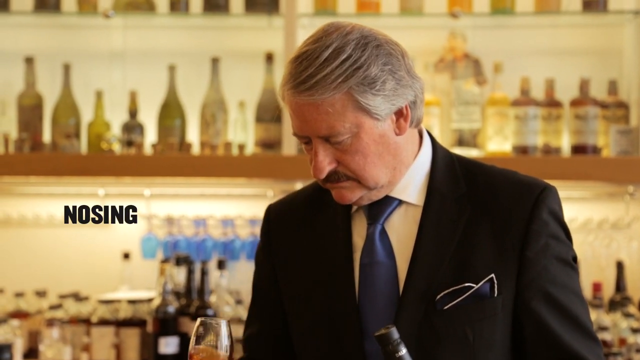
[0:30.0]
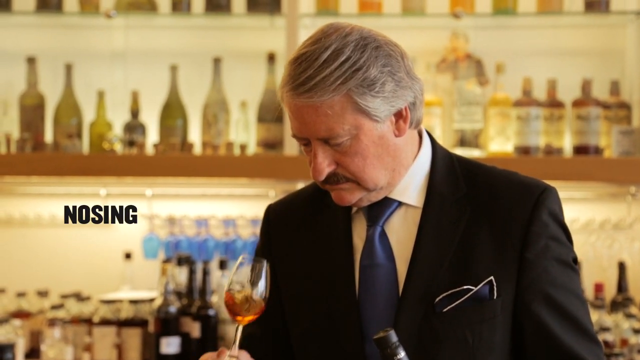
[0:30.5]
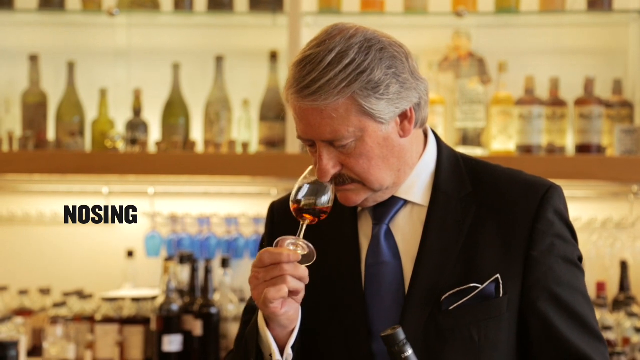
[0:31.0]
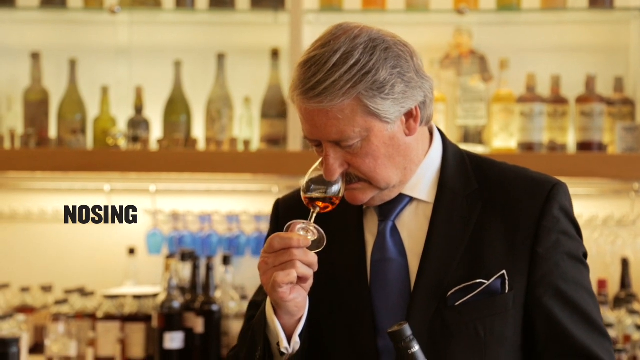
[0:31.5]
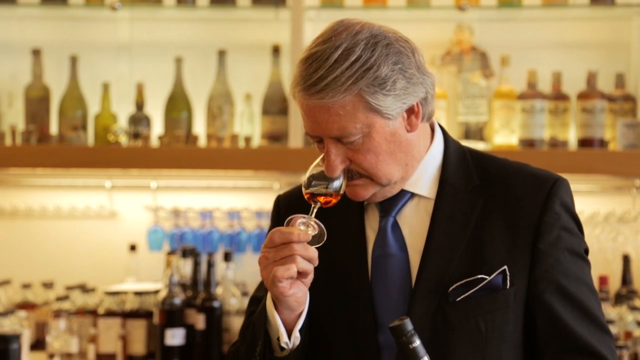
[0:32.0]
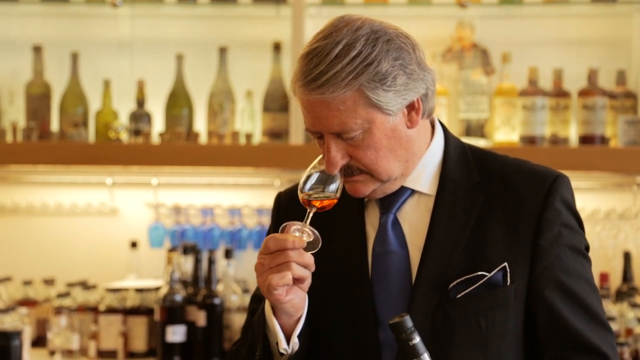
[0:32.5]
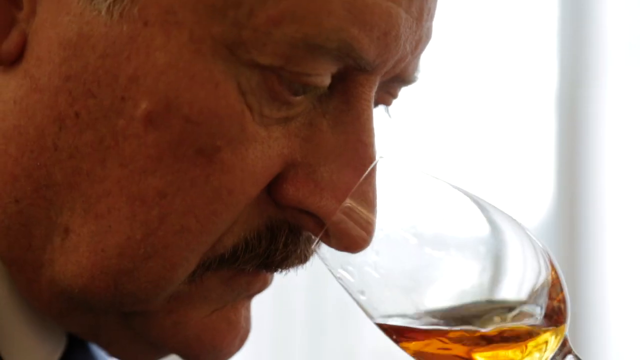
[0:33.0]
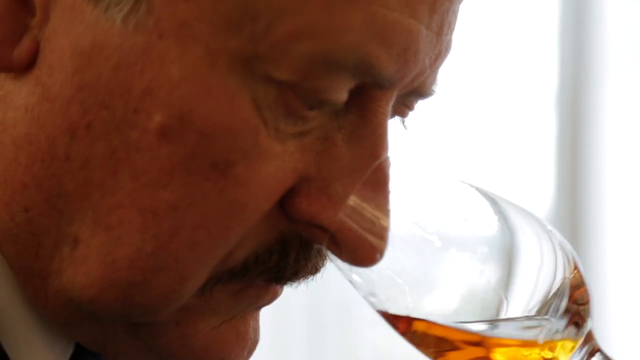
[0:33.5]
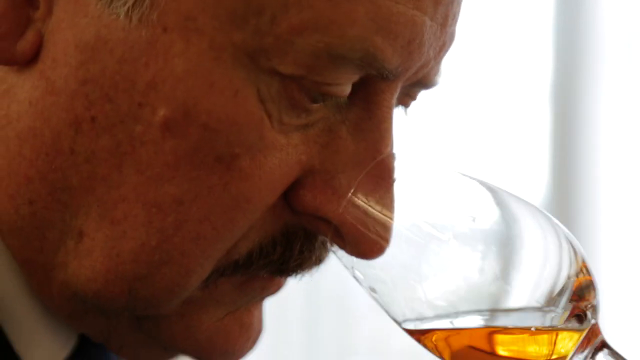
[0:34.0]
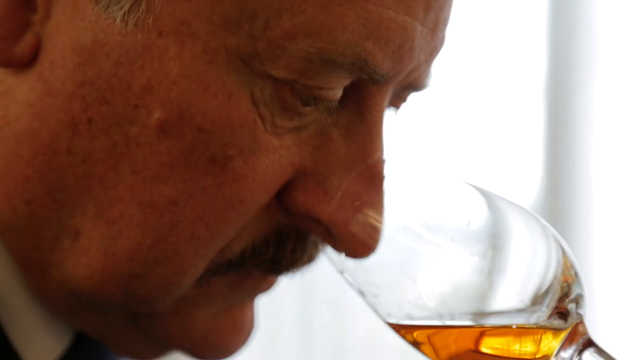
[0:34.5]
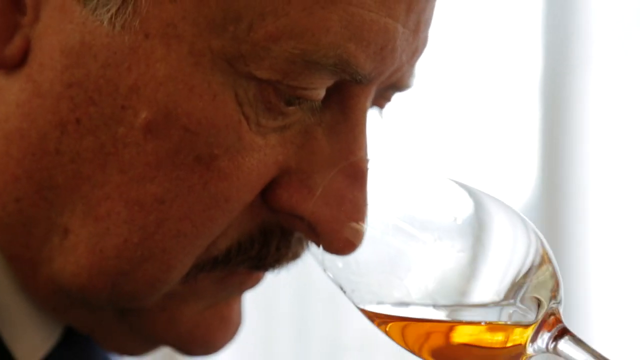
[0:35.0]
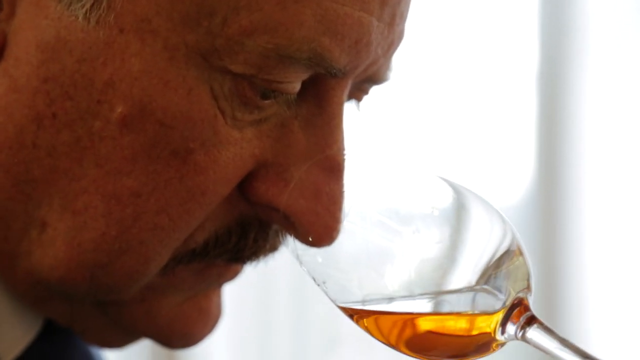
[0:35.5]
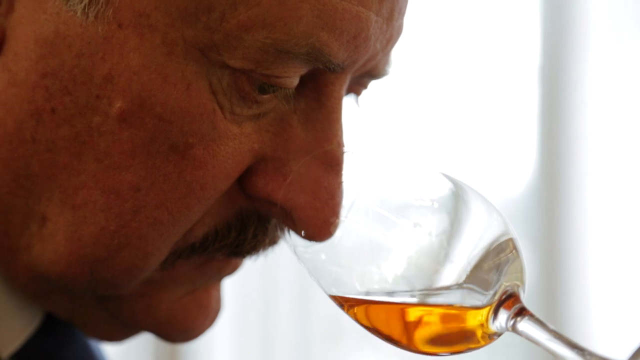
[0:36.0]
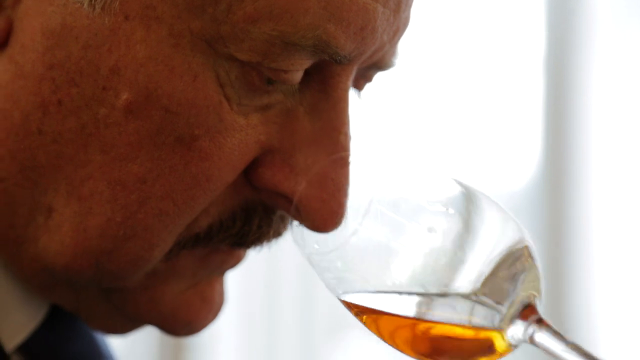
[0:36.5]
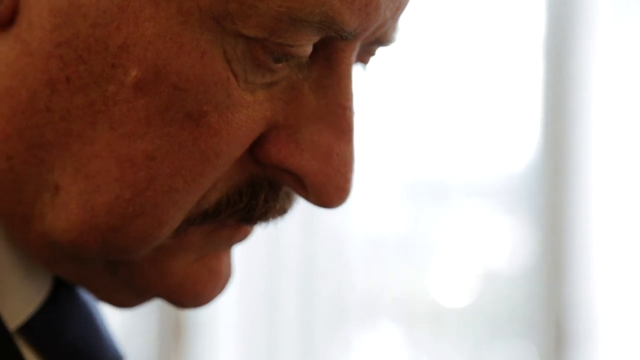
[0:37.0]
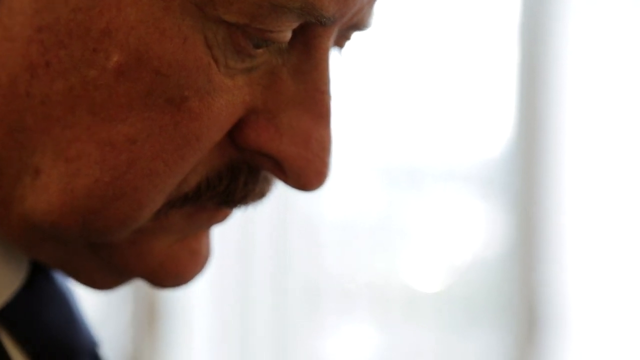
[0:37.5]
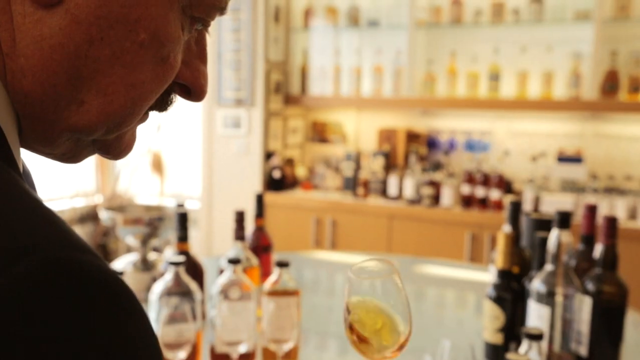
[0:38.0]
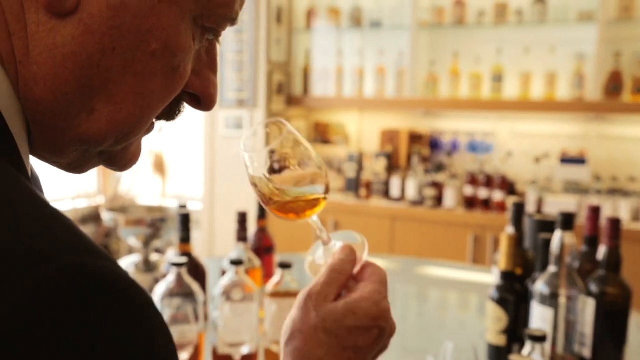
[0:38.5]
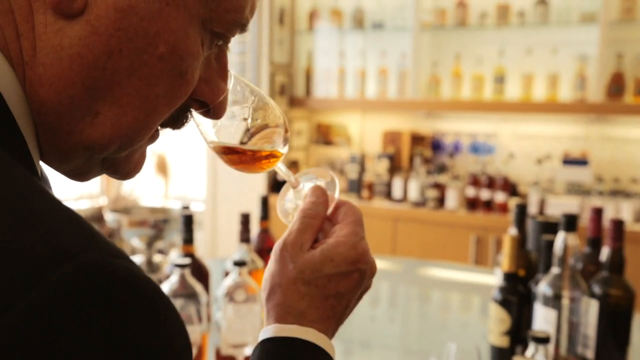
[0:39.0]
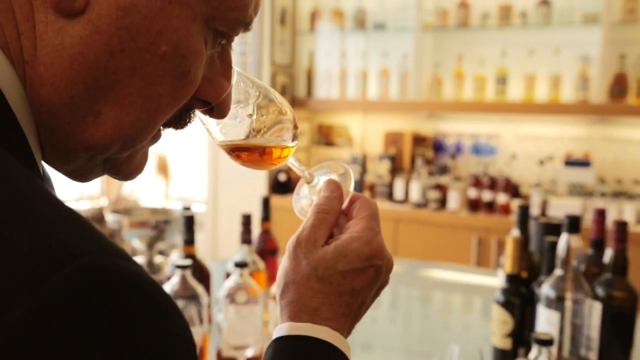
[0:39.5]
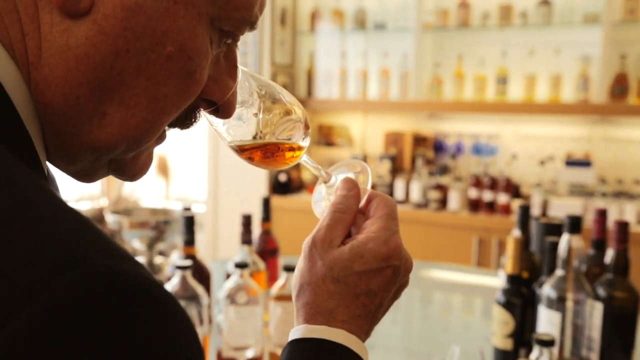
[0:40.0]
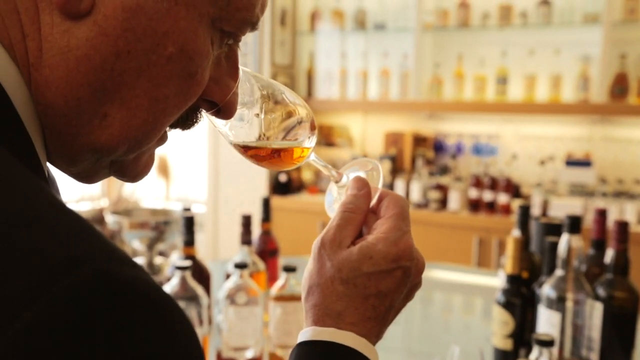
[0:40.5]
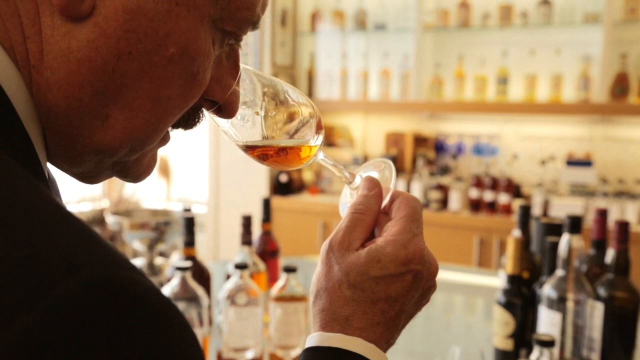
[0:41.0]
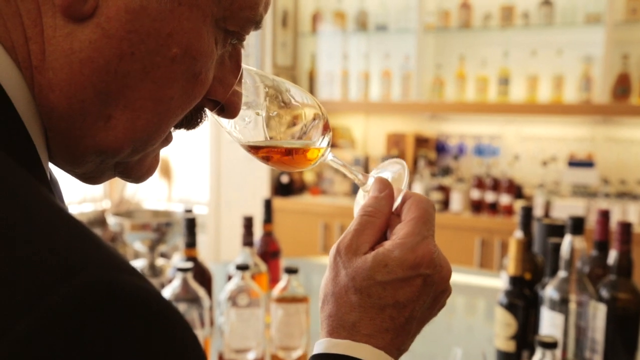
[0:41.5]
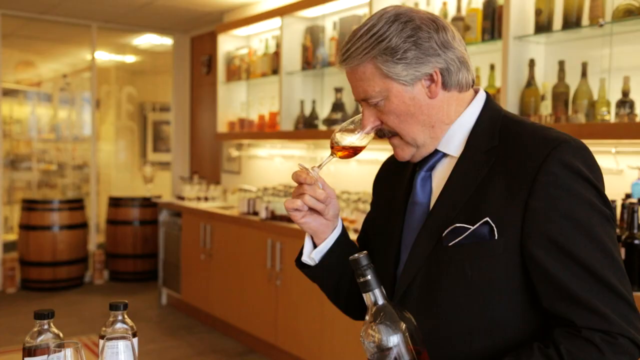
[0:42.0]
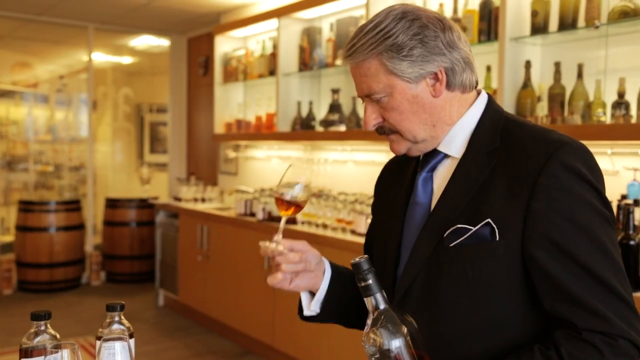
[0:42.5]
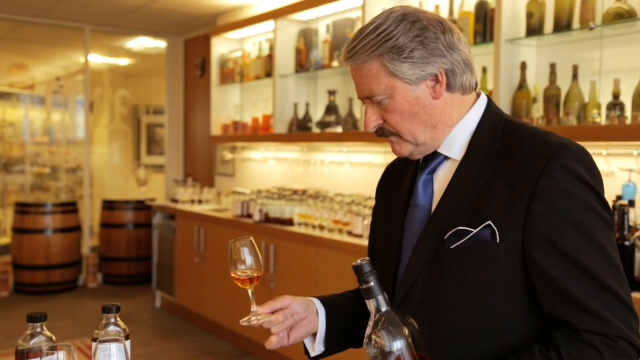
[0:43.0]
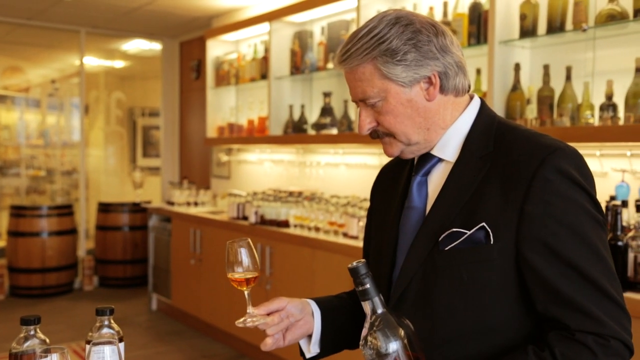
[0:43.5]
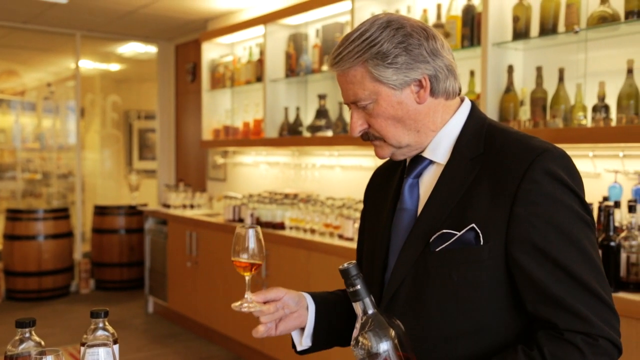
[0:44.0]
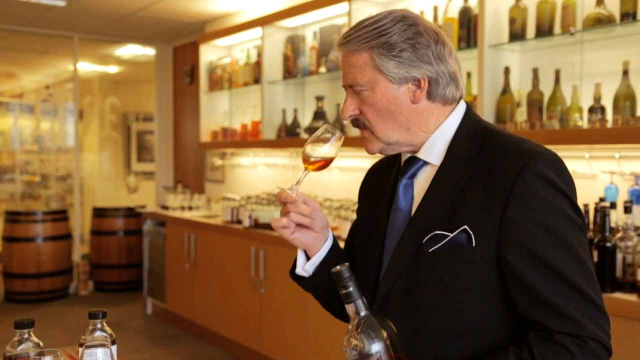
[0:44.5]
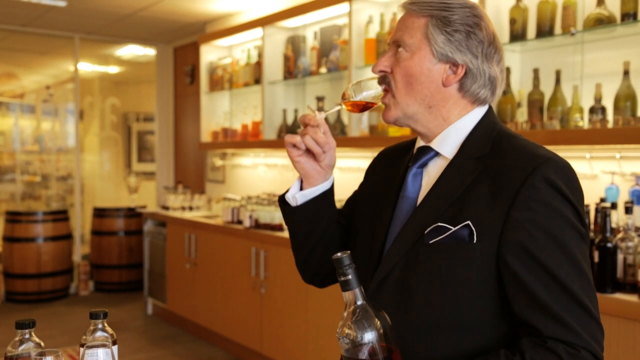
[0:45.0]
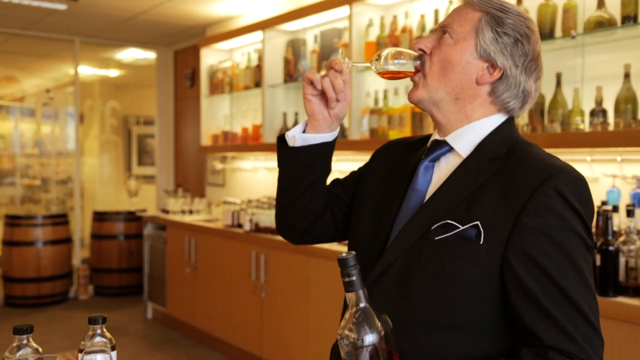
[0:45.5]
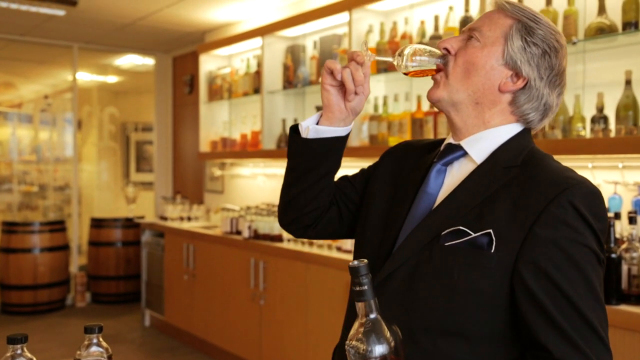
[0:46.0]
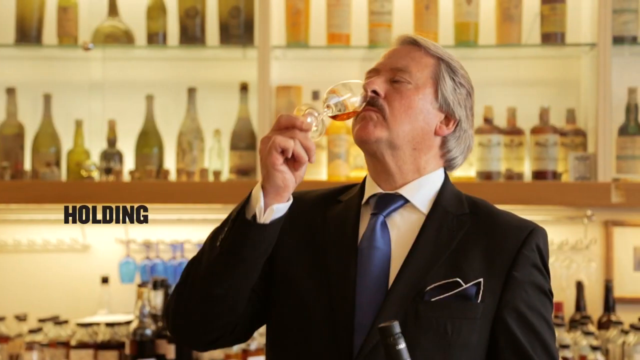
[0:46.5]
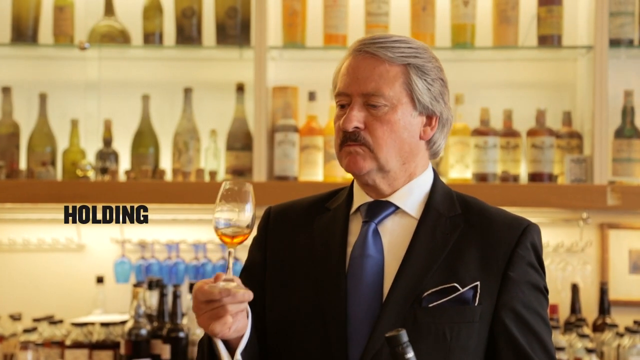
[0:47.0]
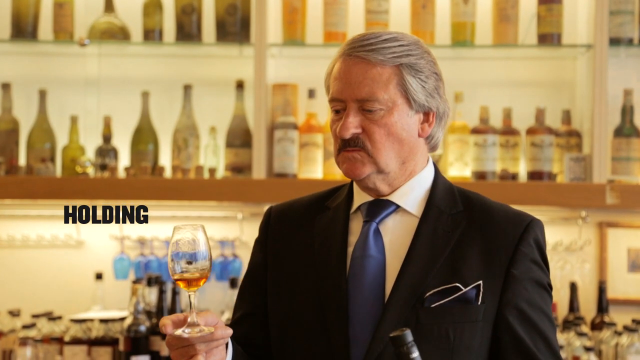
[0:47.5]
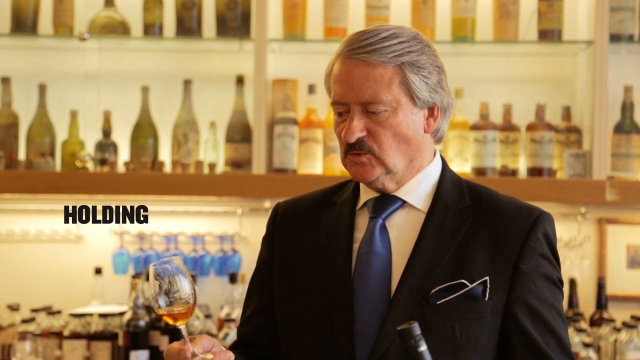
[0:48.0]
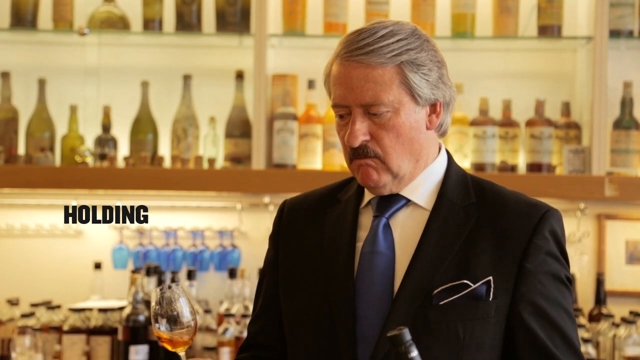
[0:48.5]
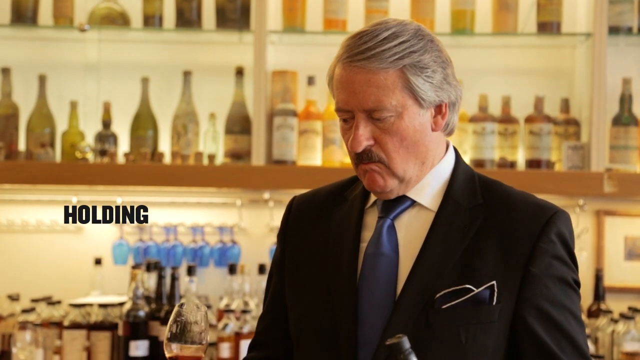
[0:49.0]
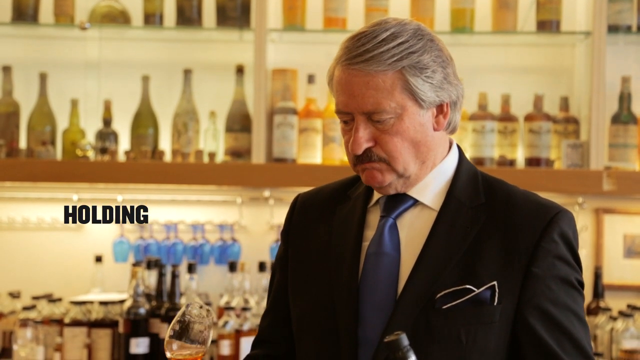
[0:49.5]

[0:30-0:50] After nosing, a mouthful of the whiskey is taken into the mouth, swished through the mouth and teeth, and then spat out rather than swallowed.